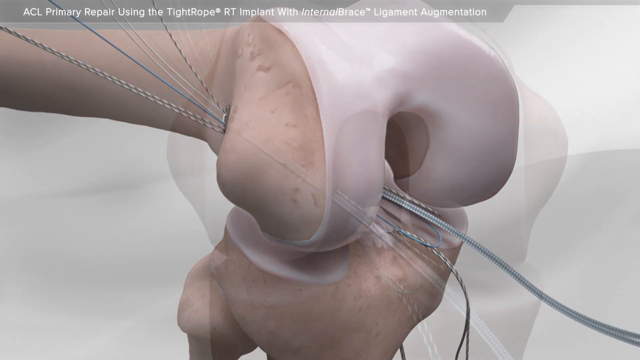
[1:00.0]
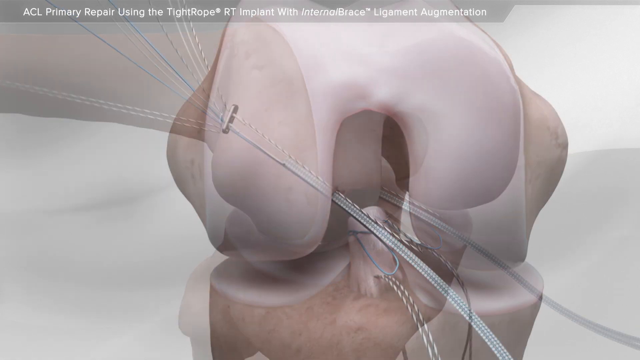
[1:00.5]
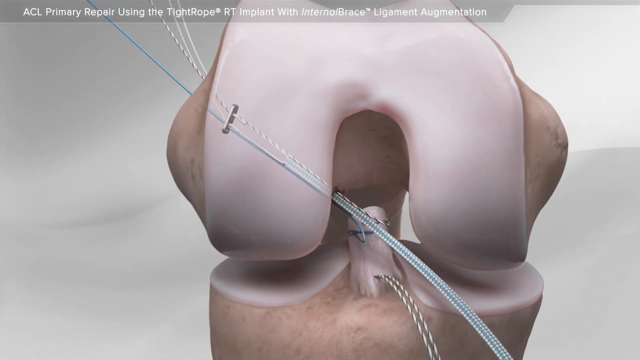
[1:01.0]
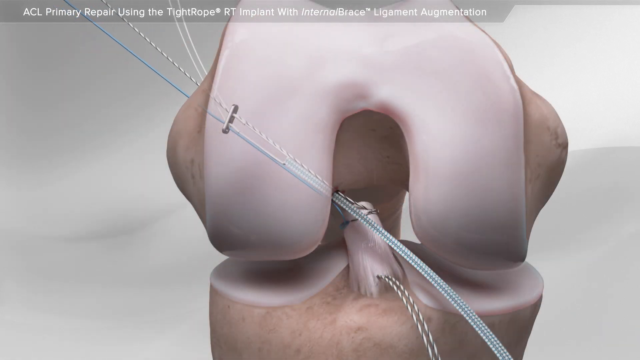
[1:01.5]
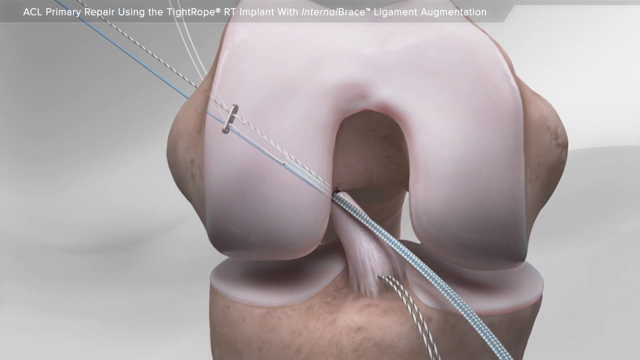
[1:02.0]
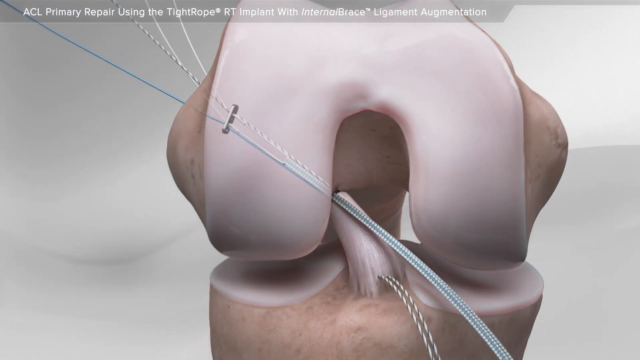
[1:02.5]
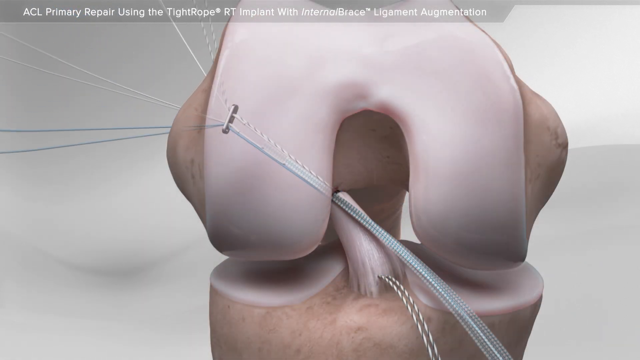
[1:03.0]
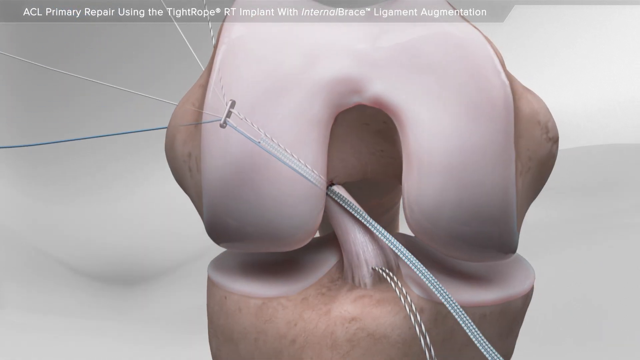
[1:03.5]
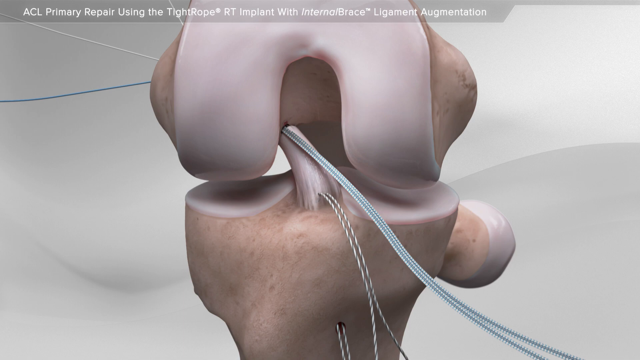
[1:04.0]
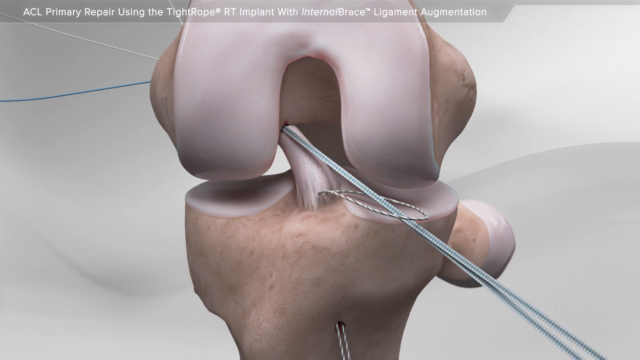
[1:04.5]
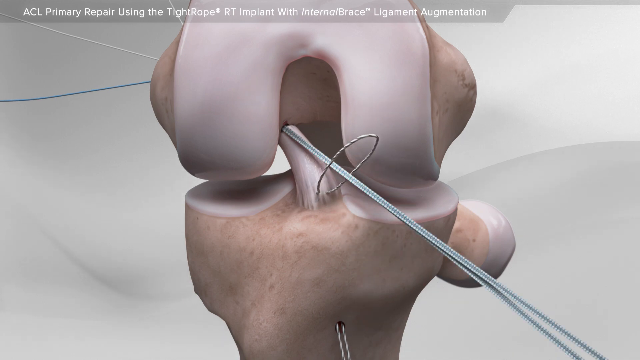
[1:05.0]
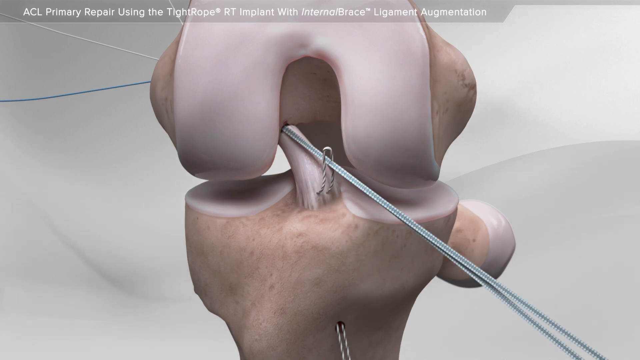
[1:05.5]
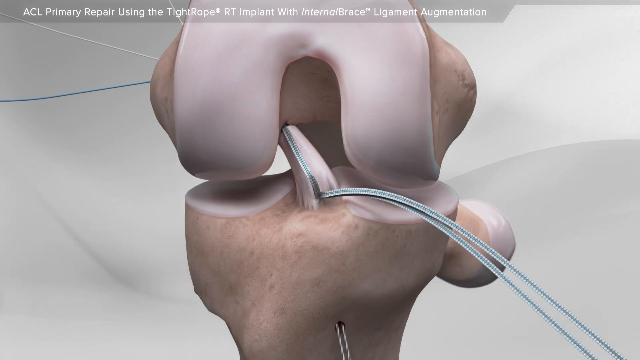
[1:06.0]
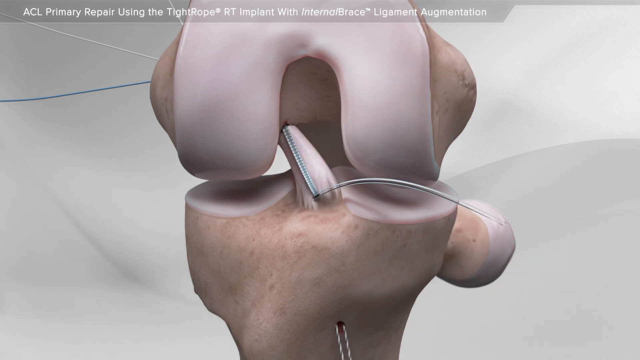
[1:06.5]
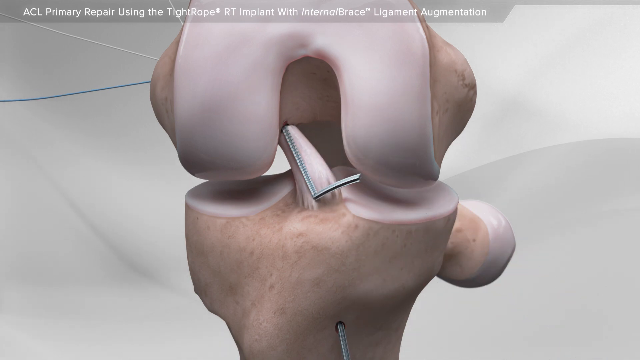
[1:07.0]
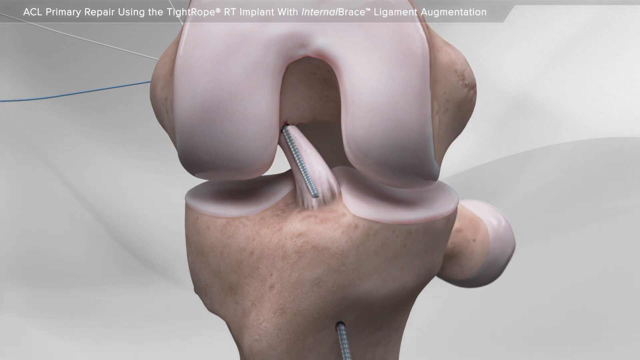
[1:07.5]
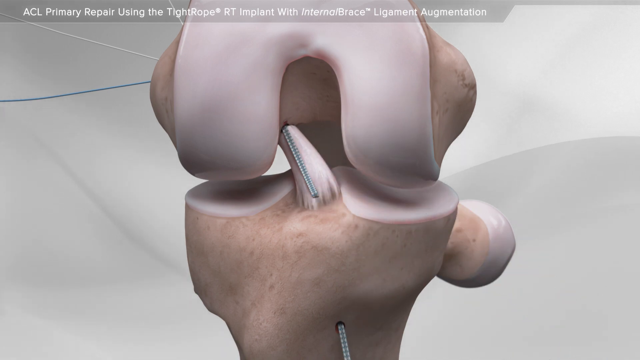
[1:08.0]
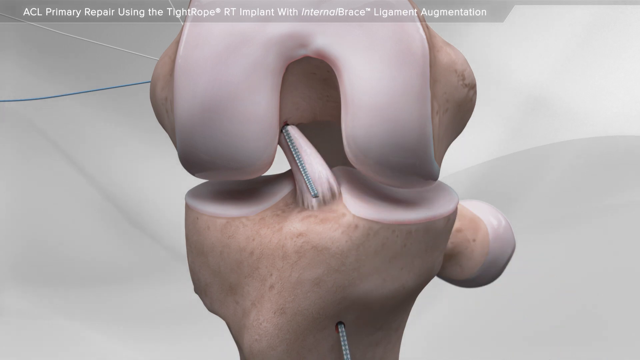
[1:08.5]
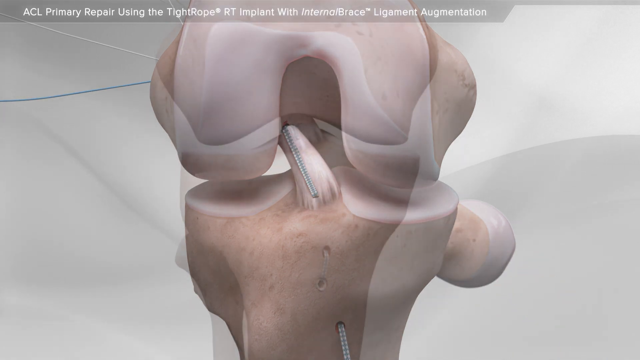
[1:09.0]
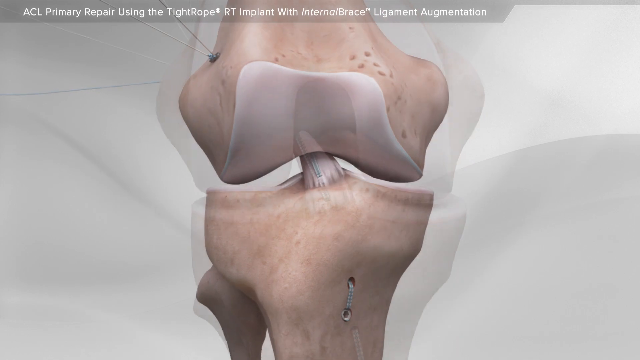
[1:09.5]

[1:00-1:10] Bones are in the main picture, with text up top reading "ACL primary repair using the tightrope RT implant with internal brace ligament augmentation." Strings are being pulled through the connection between the two bones, and some are pulled all the way through. In the middle of the two bones there appears to be a fragment sticking up, and one of the strings pulls the fragment as the string is pulled through on the other side.